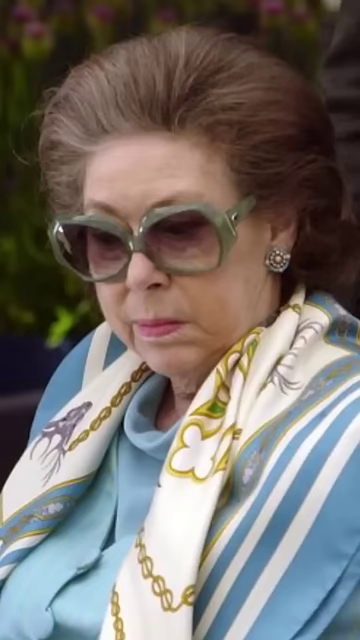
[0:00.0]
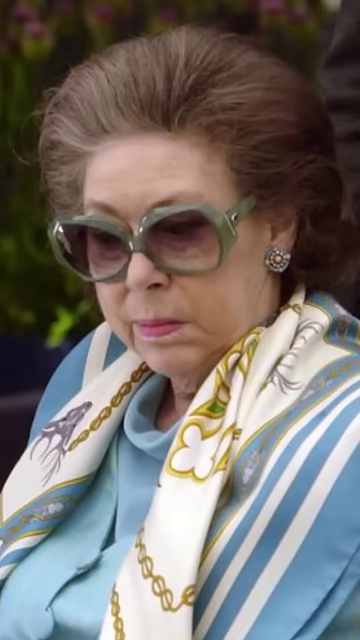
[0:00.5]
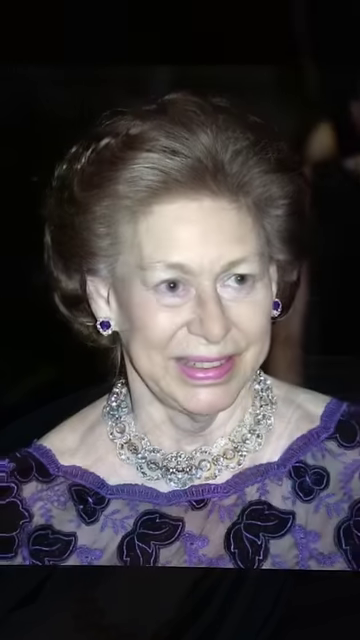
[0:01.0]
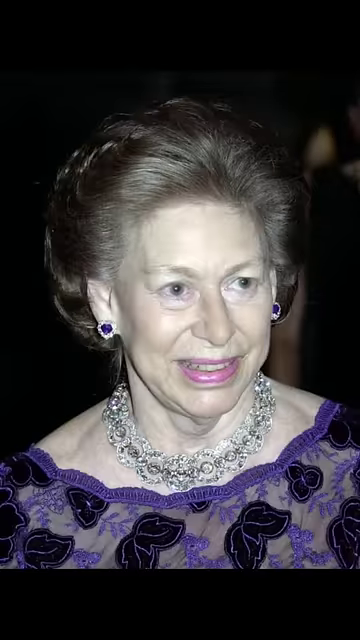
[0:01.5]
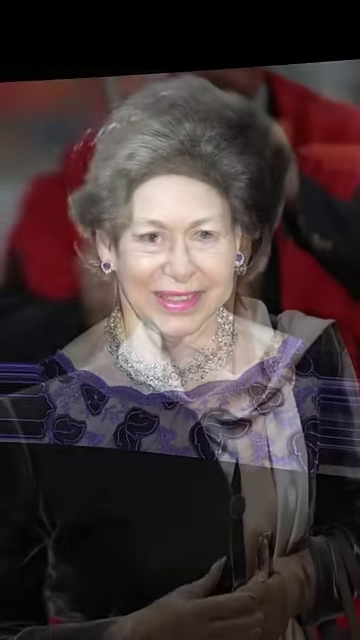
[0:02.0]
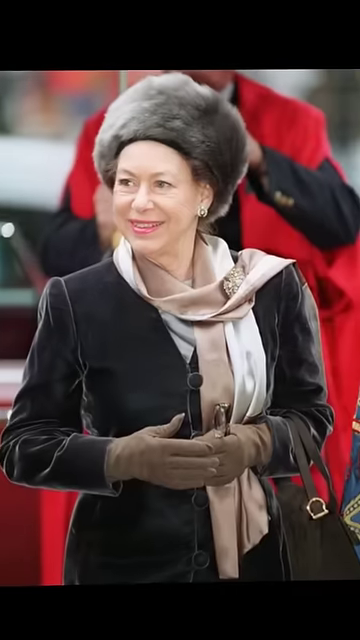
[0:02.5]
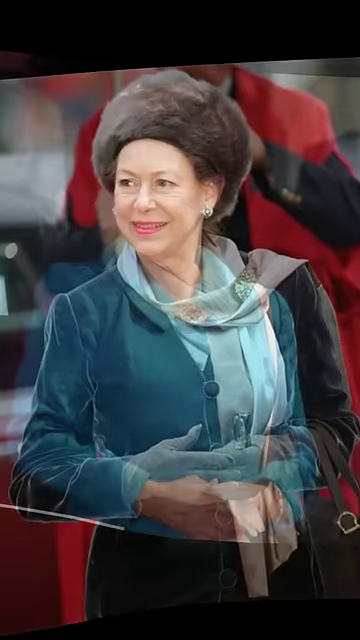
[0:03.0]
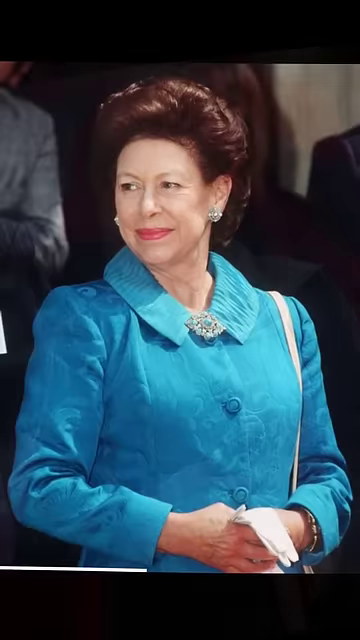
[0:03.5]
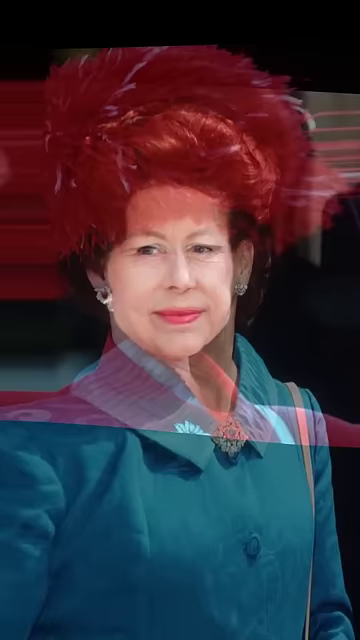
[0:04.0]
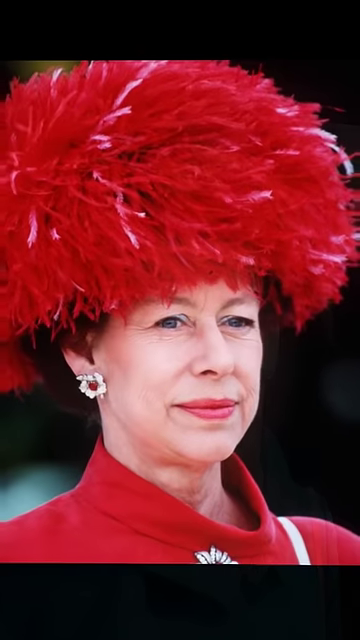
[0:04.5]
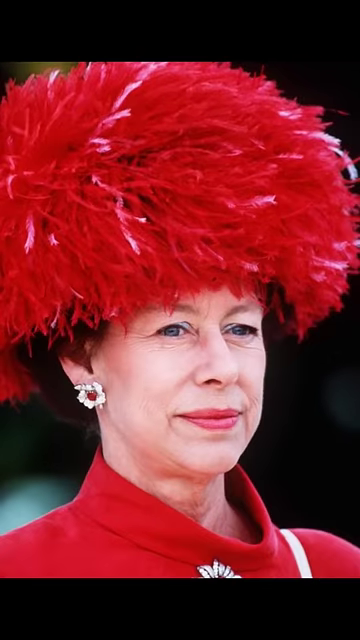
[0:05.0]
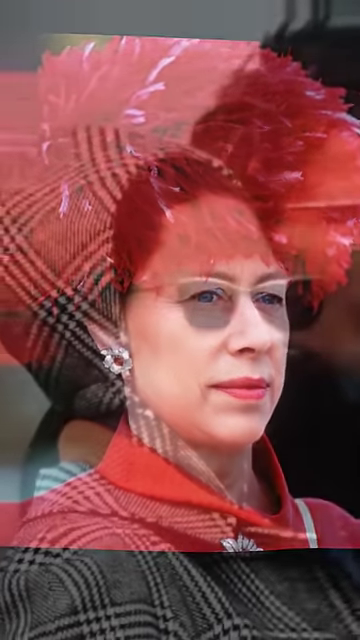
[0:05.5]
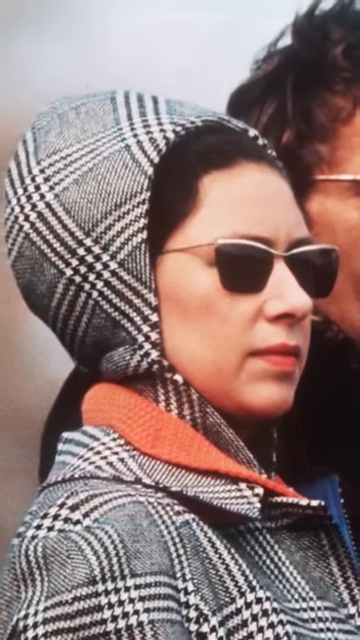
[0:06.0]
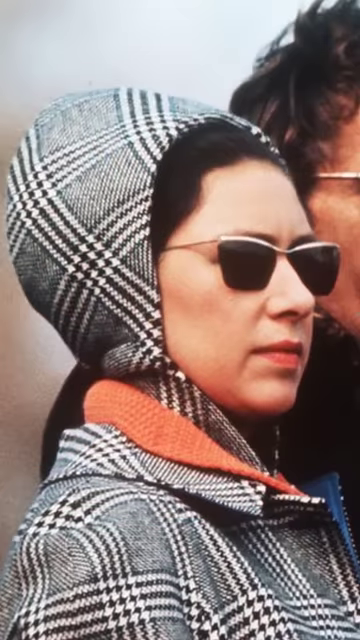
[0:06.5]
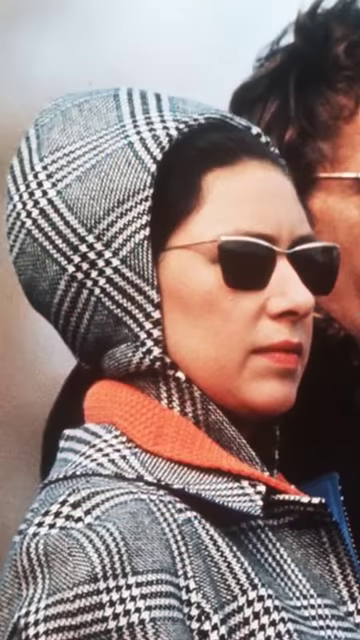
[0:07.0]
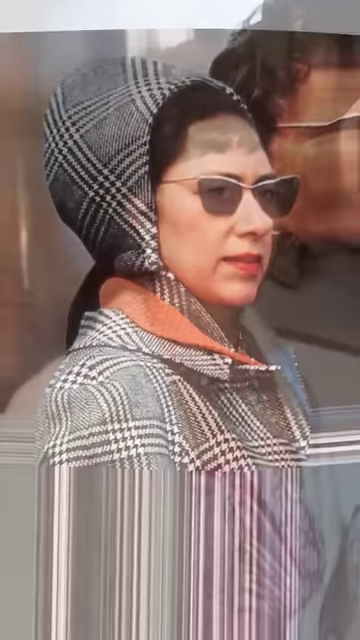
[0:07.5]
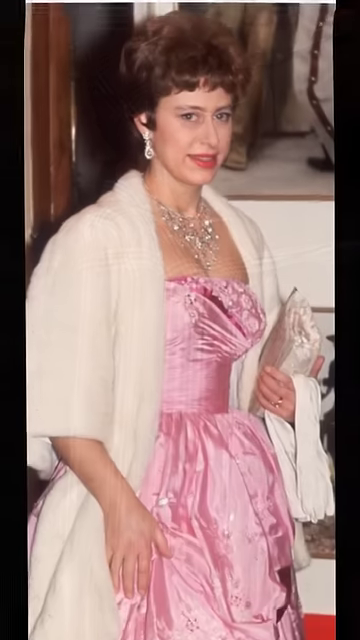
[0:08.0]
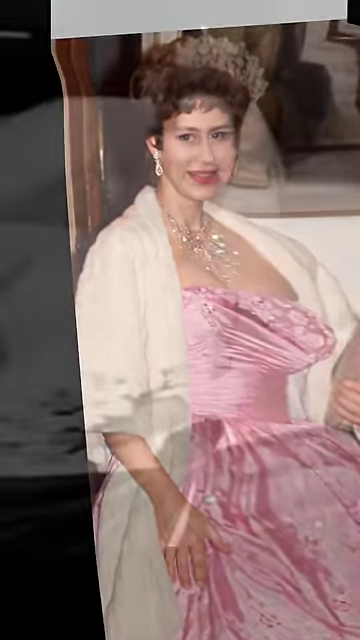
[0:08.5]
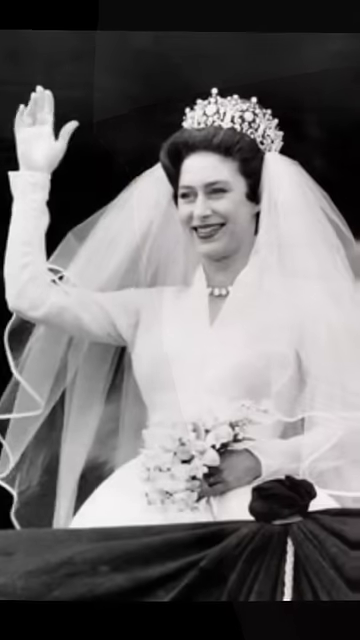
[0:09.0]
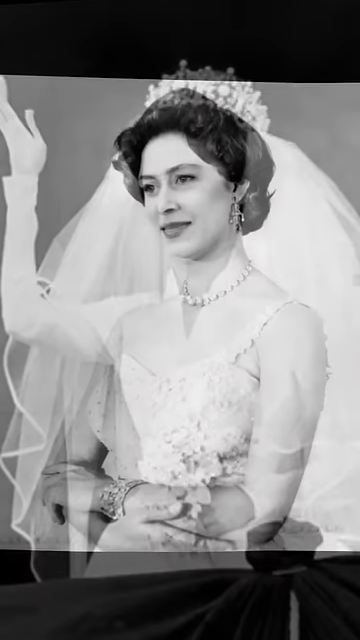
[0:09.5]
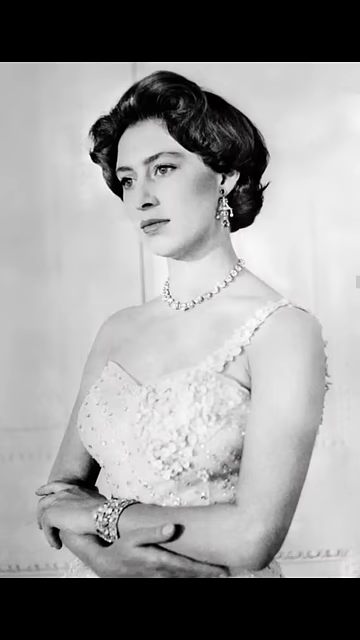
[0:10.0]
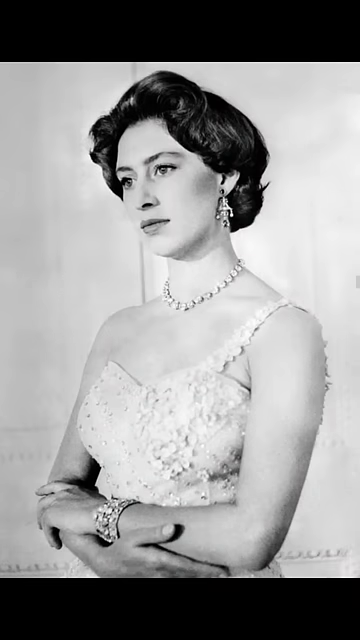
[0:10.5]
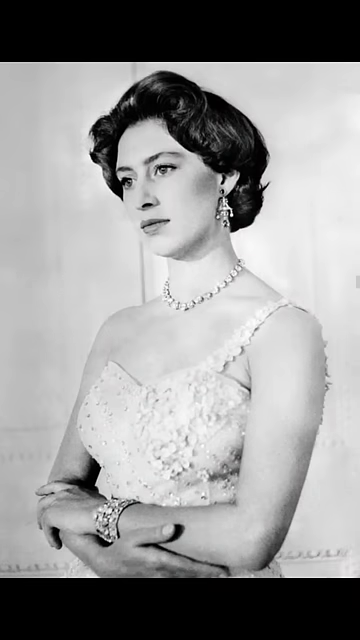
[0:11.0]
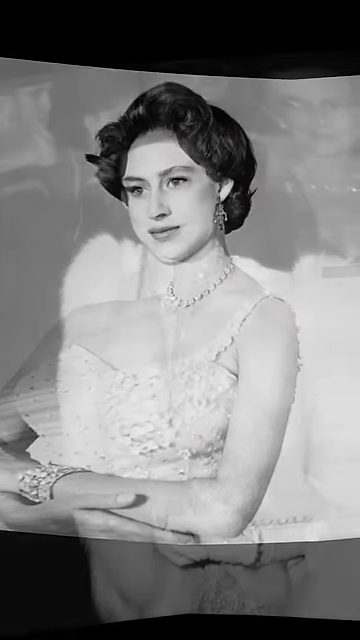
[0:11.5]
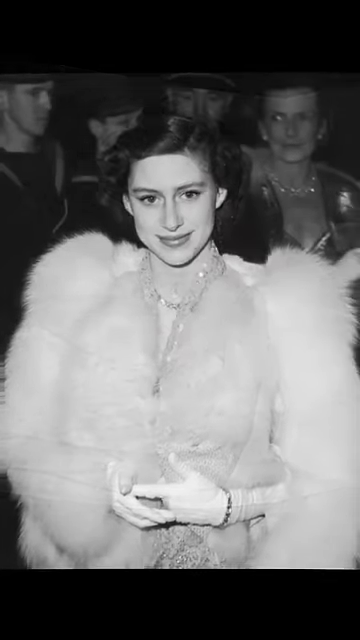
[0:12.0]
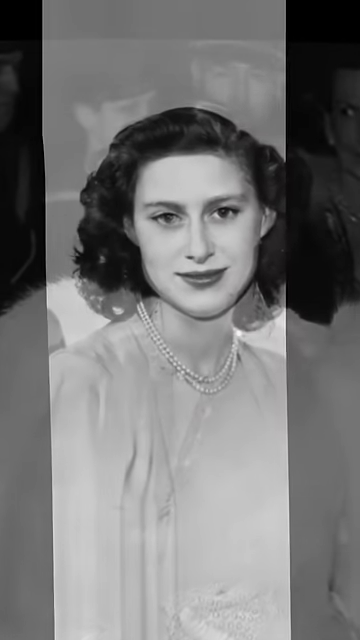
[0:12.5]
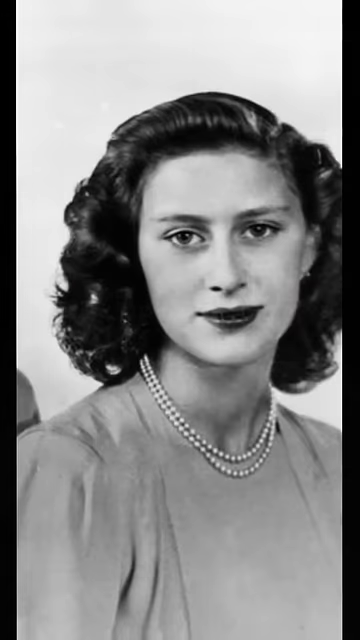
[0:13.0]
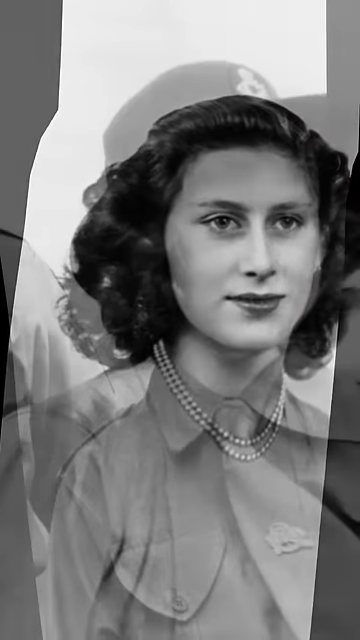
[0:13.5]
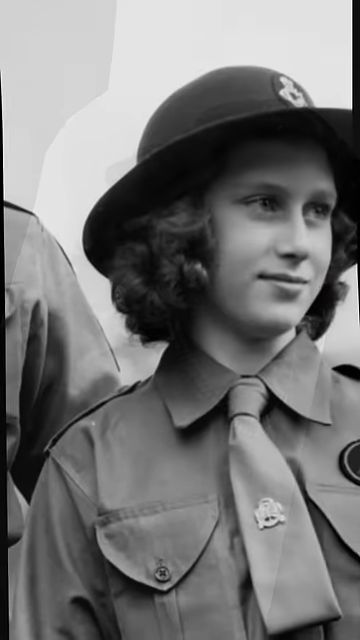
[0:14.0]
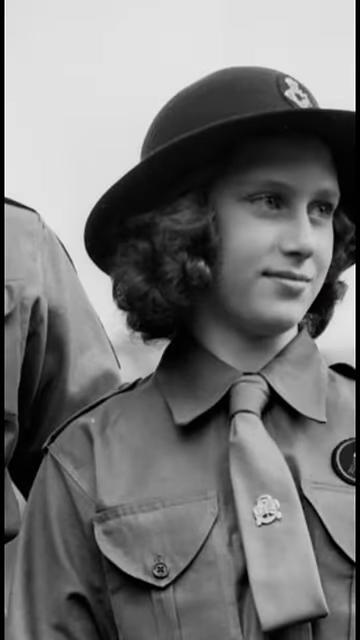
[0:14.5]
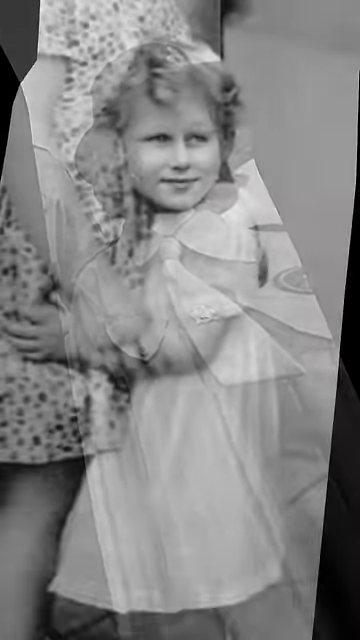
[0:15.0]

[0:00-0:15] A series of pictures shows a woman who looks like she may be some kind of royalty; she has a crown on and waves to the crowd. The pictures show her at different ages: at the start she looks to be very old, and as the video plays on she gets younger and younger. She appears in all kinds of different outfits, dresses and attire. Her identity is unclear; she is an older woman shown in many different dresses and at many different ages.